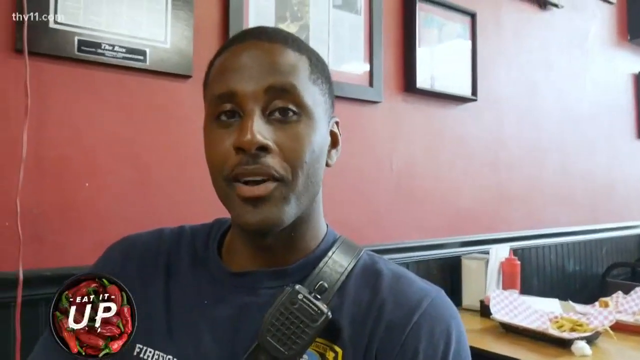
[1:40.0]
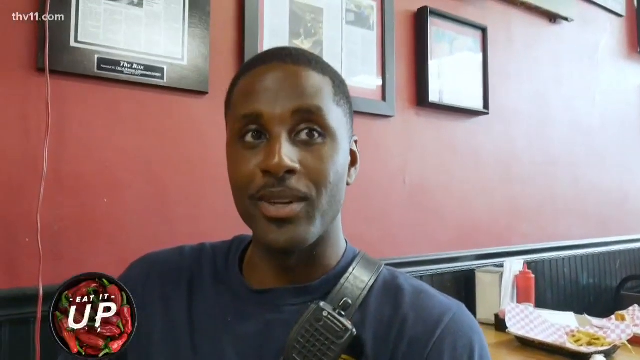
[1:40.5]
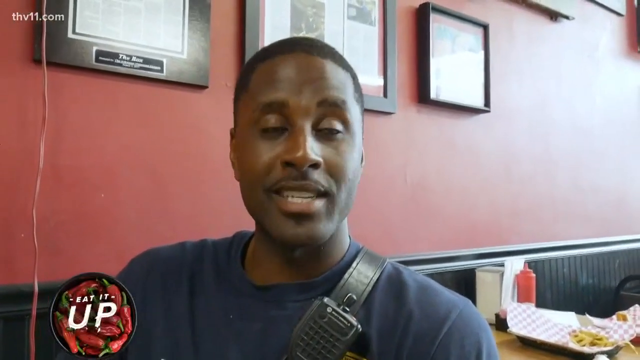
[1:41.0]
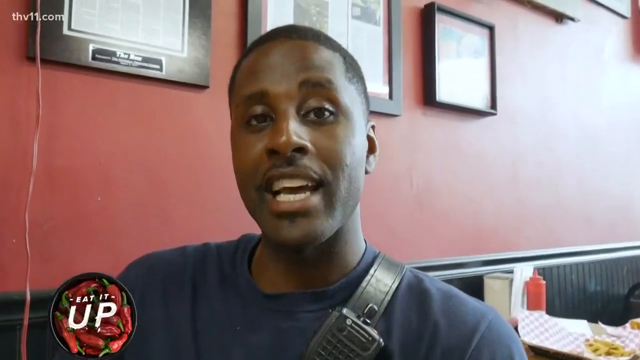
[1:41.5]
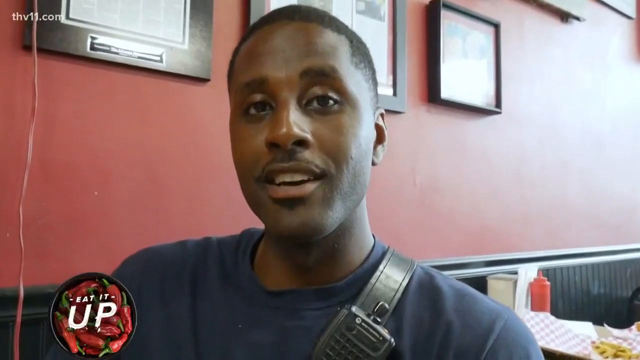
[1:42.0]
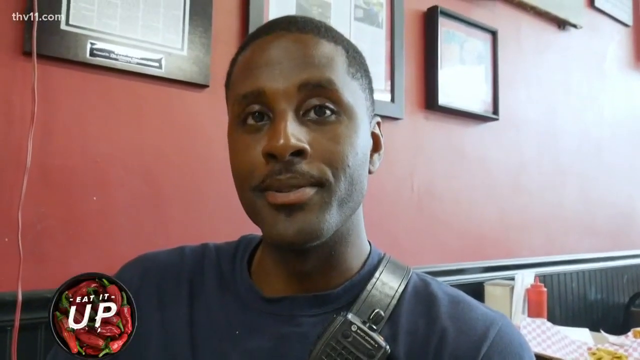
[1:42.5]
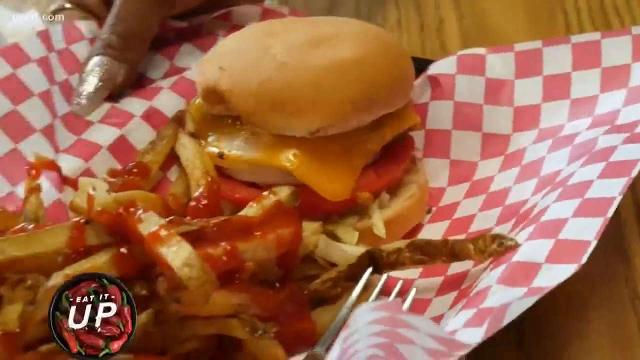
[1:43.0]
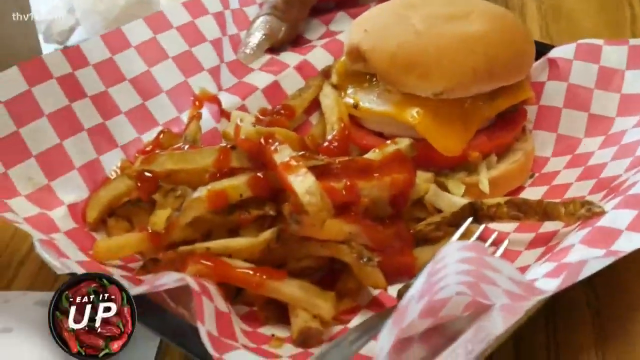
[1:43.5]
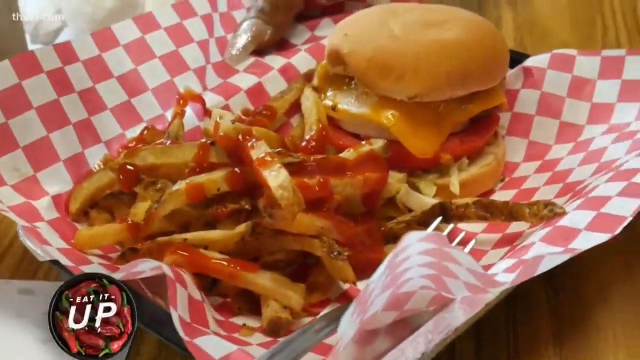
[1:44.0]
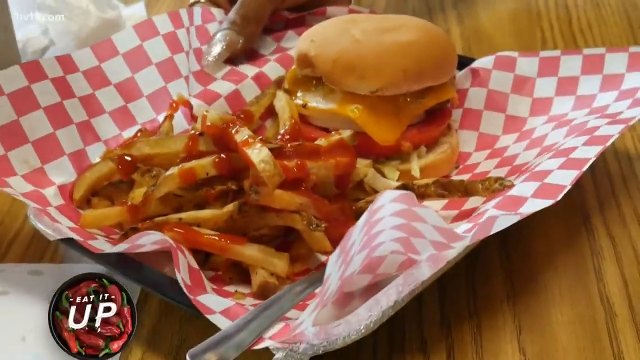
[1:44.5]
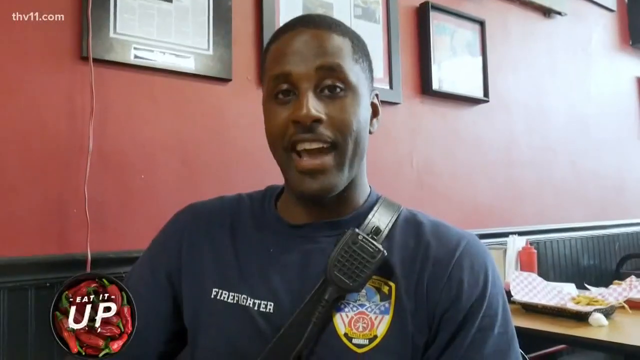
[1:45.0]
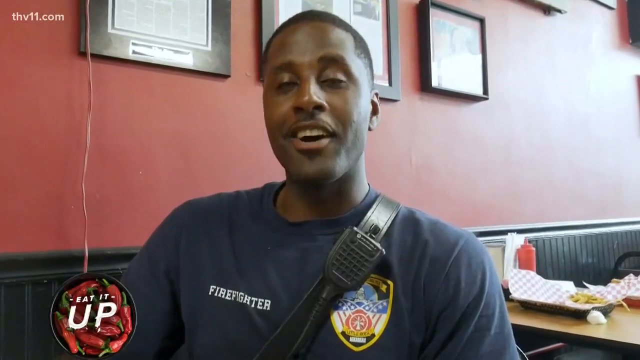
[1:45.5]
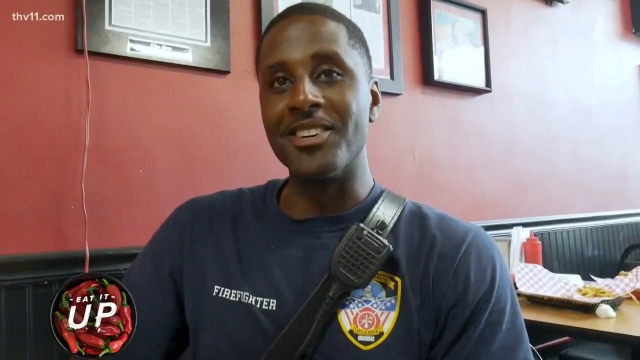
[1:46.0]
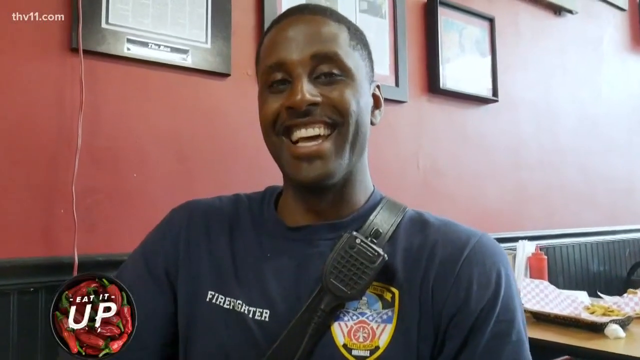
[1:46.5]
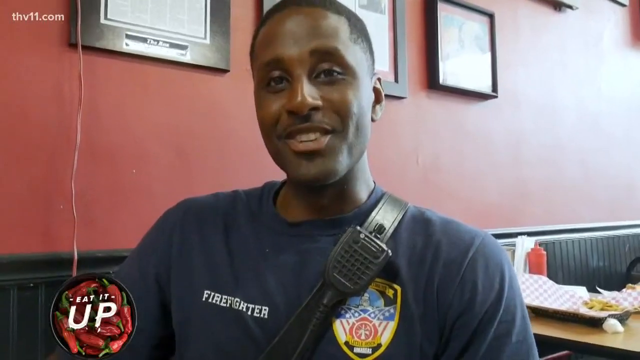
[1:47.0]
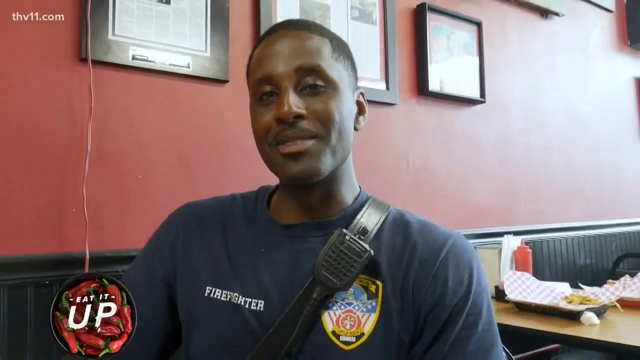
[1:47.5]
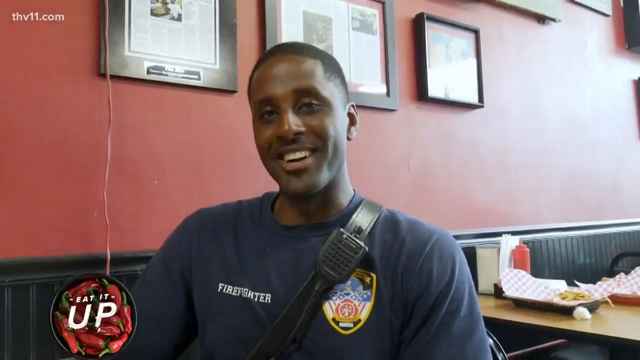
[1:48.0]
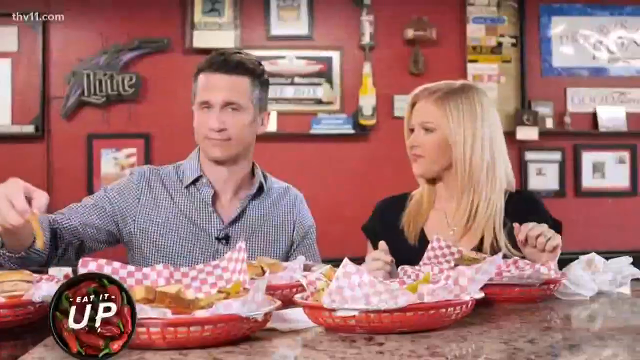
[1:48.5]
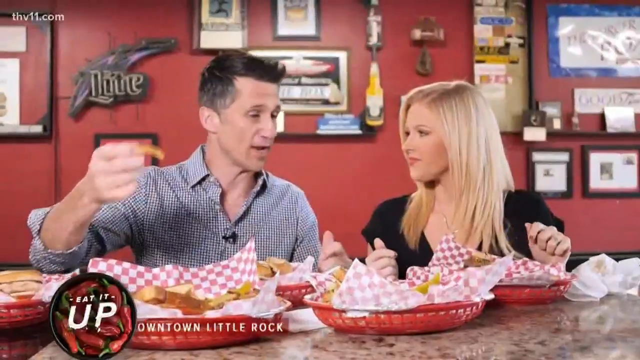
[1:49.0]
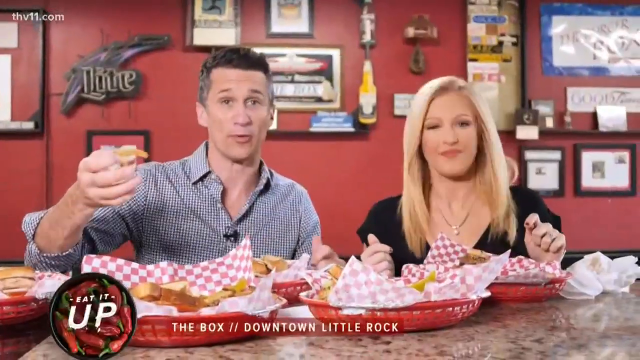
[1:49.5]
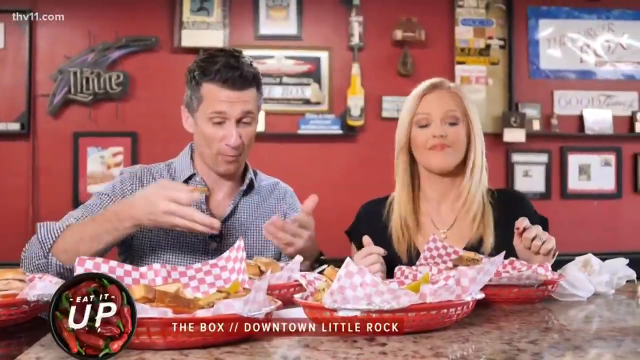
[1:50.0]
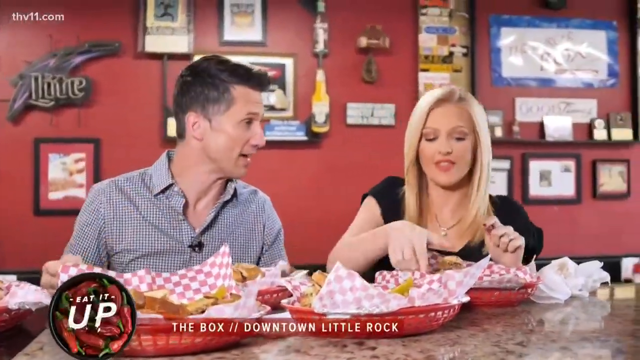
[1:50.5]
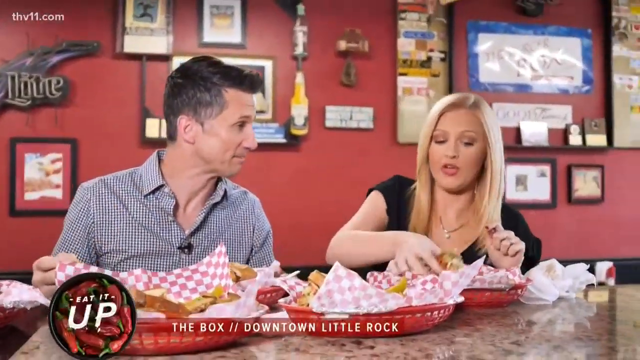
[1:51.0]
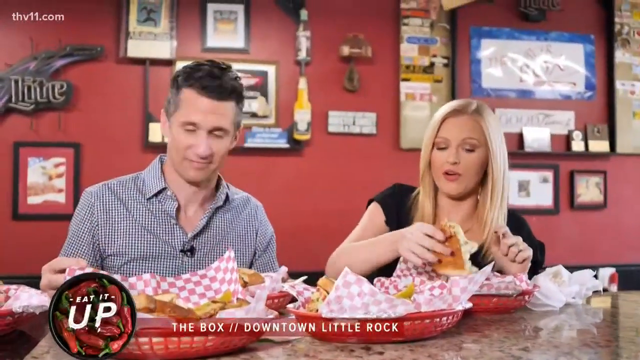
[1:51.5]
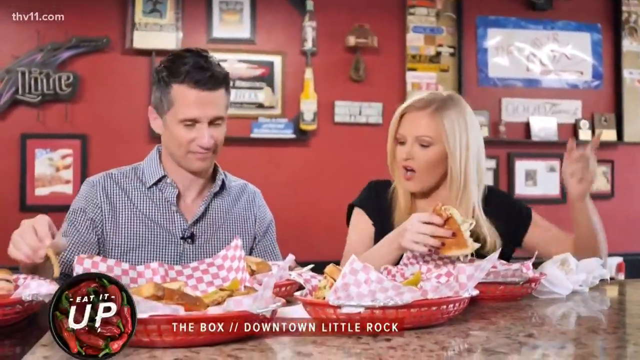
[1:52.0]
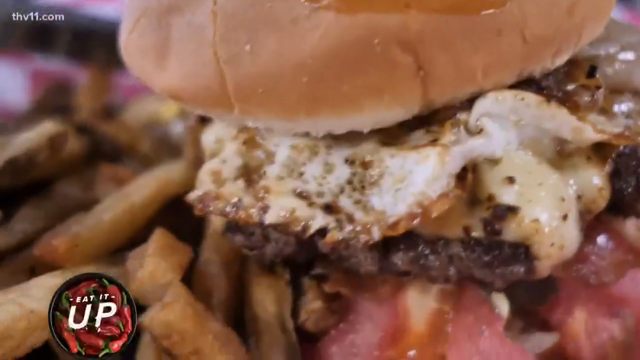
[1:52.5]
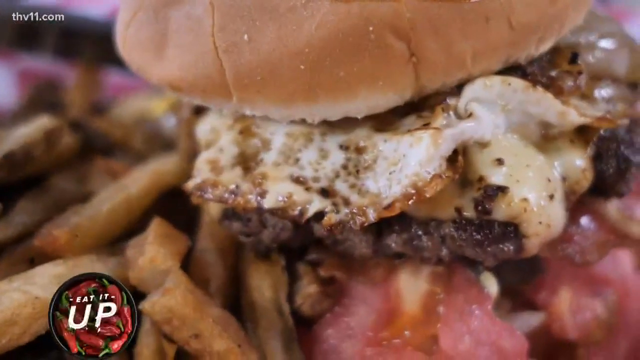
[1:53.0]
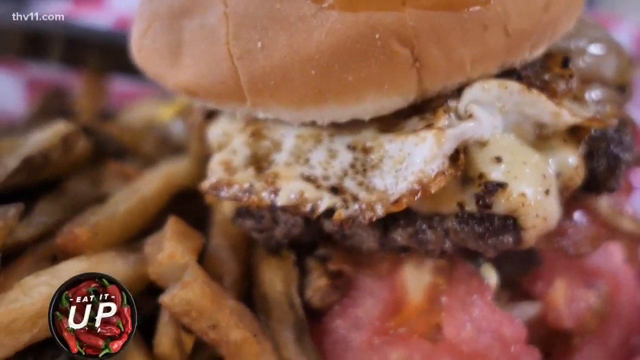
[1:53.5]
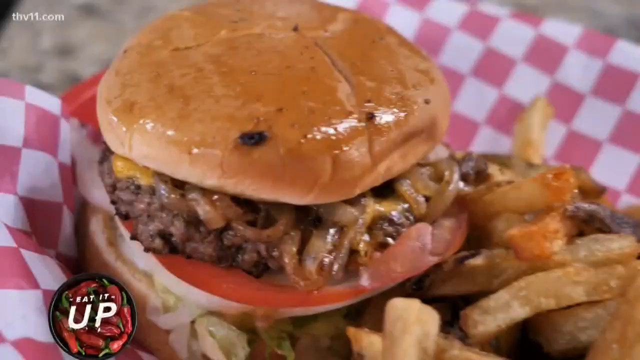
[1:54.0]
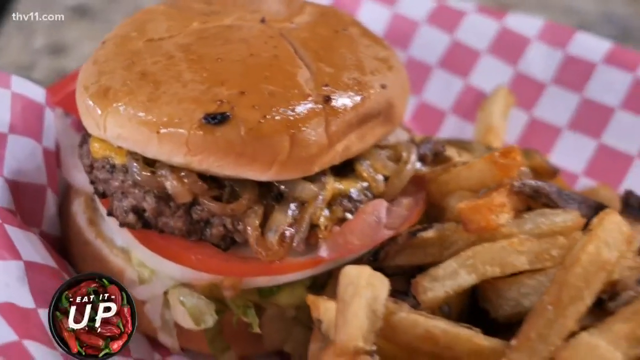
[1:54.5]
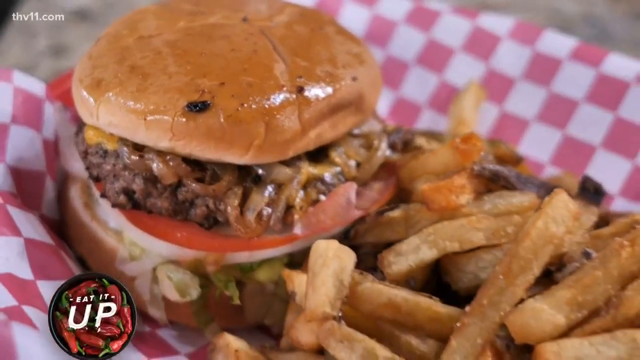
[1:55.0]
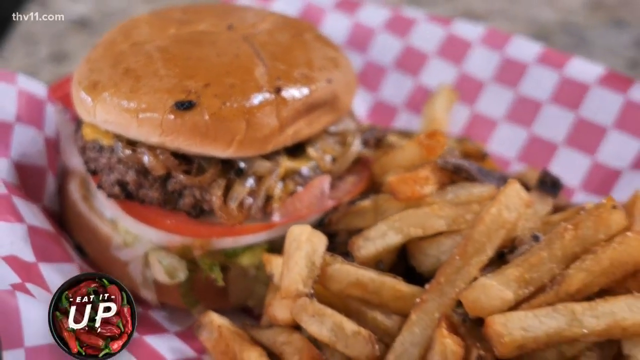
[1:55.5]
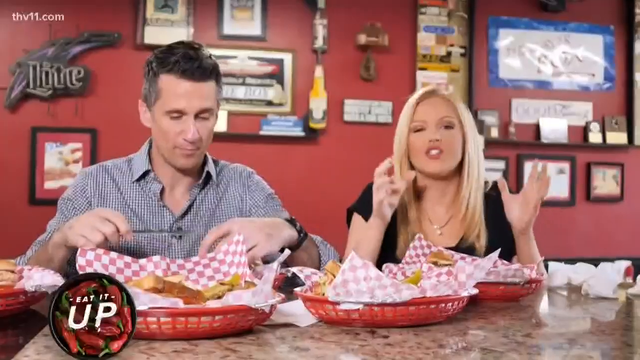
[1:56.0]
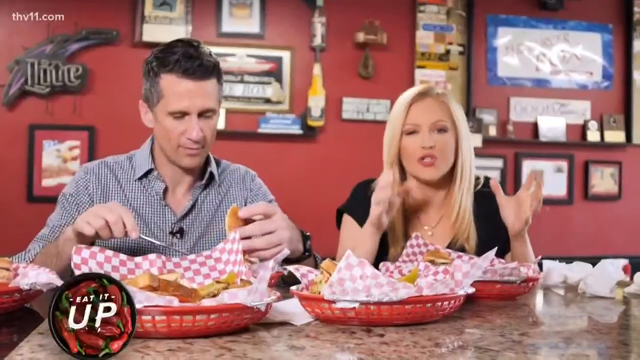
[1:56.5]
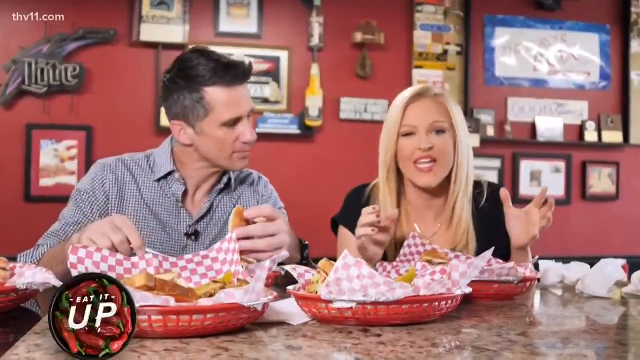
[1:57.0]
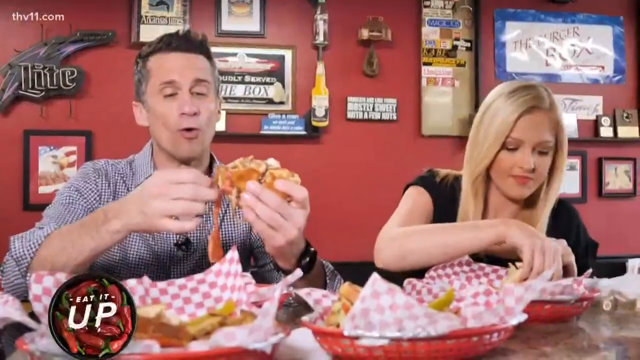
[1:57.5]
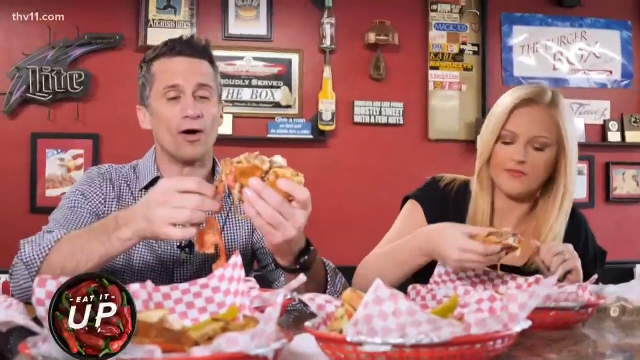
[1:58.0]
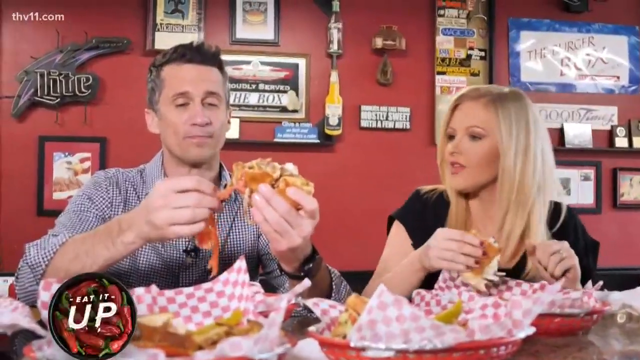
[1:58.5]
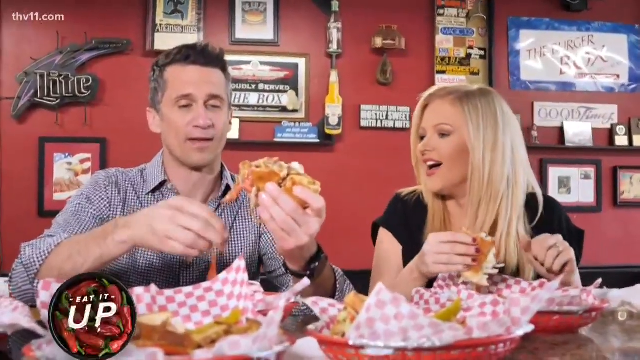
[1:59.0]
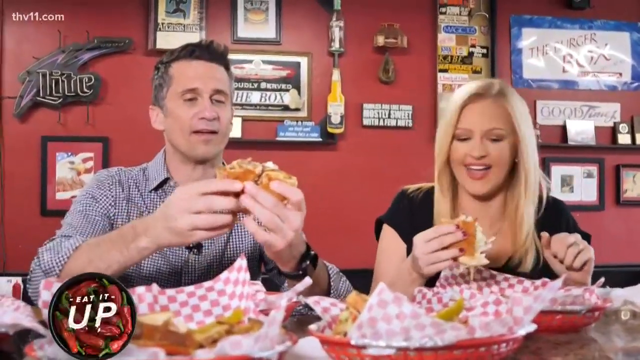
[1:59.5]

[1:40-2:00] A man, apparently a customer and a firefighter, is in the restaurant showing the food he was served. Then "the box downtown Little Rock" is shown, apparently the name of the menu item. It is a burger with chips and patties, and the YouTubers from Eat It Up have the burger. The firefighter wears a blue T-shirt. The YouTubers eat the chips and burgers. The restaurant background is red, with portraits and chairs on the wall; the dishes and packaging are red, which looks like the restaurant's theme. A man with short hair, the firefighter, one of The Box's clients, looks close to the camera. The burger the YouTubers eat has eggs, patties, tomatoes and fries, and looks yummy.